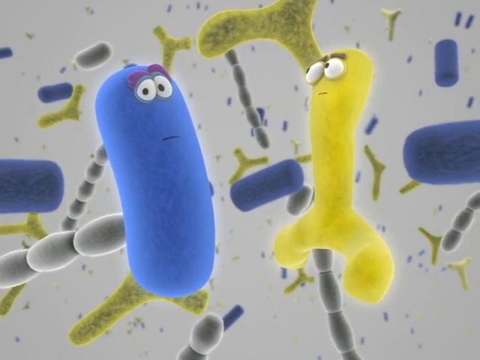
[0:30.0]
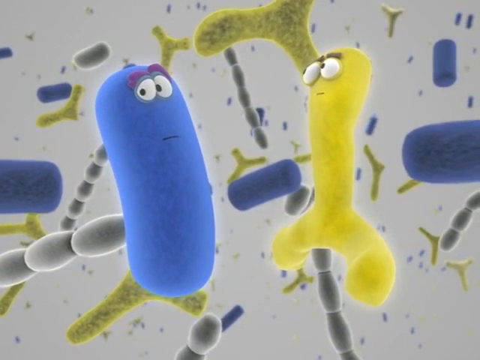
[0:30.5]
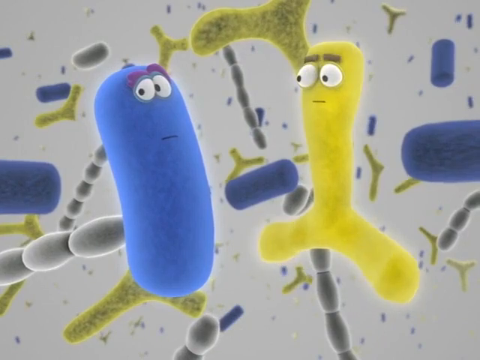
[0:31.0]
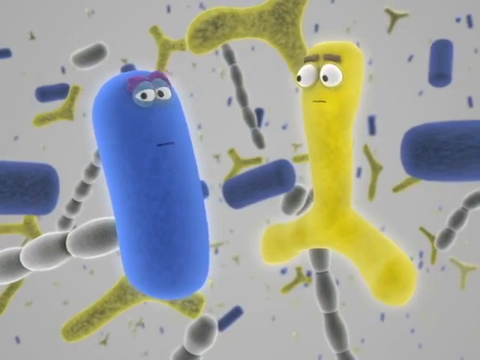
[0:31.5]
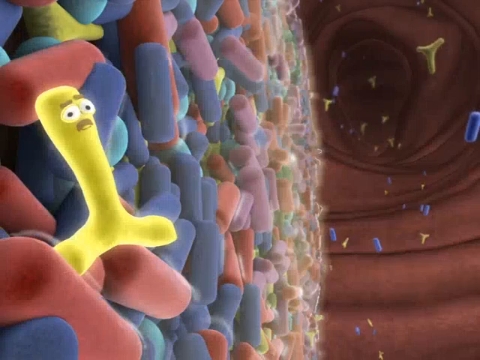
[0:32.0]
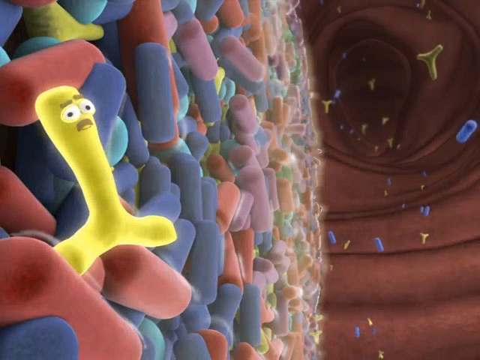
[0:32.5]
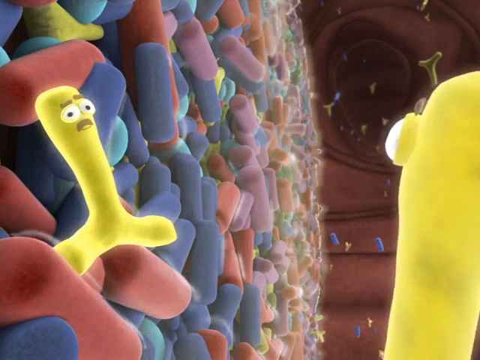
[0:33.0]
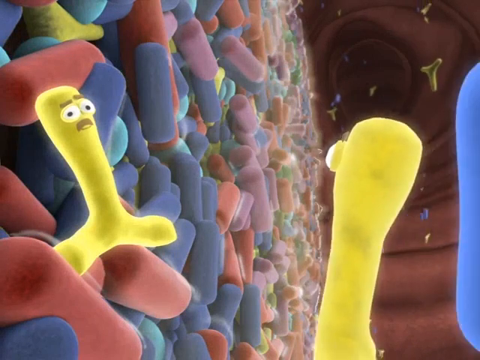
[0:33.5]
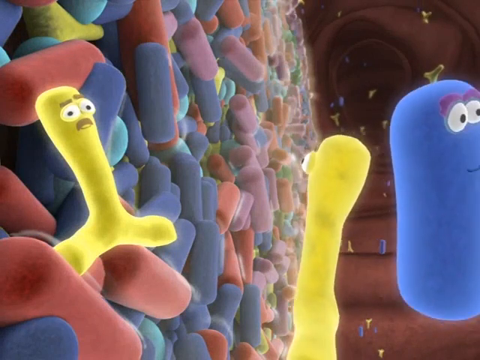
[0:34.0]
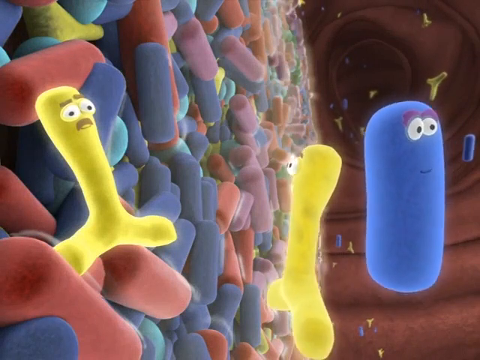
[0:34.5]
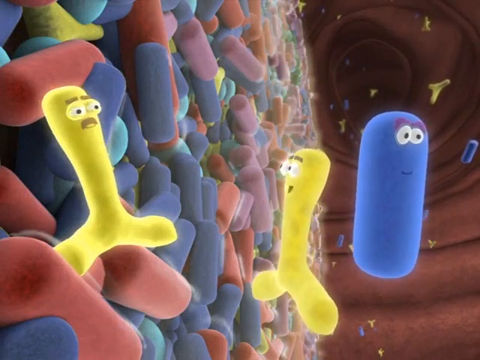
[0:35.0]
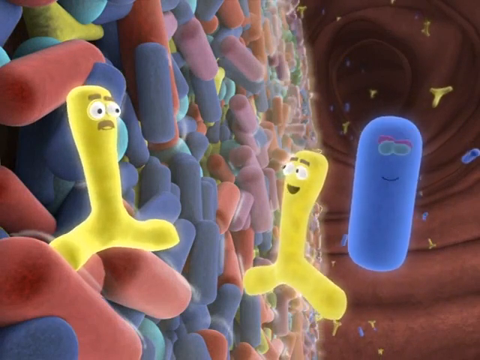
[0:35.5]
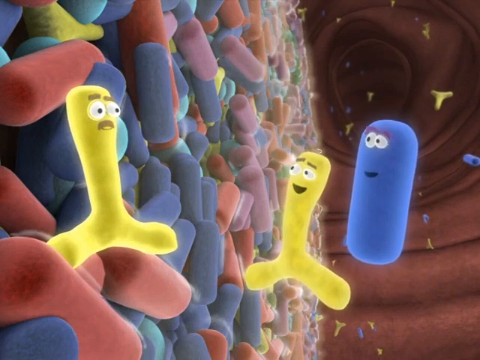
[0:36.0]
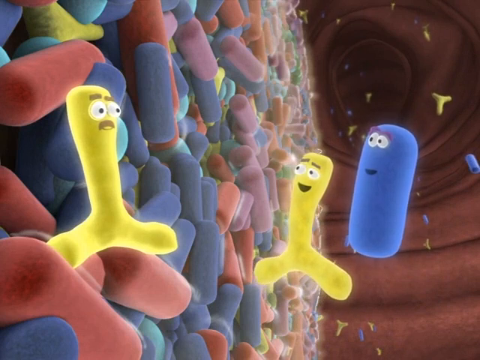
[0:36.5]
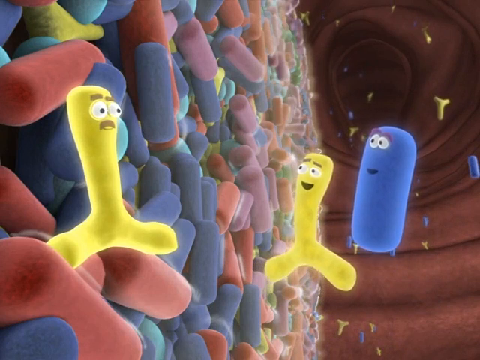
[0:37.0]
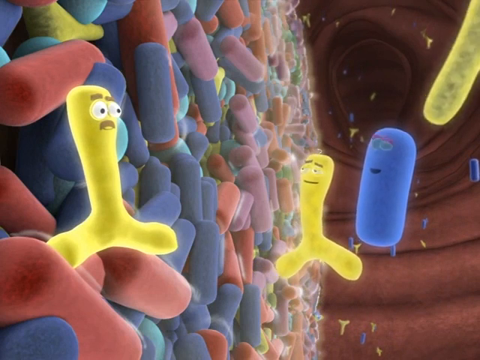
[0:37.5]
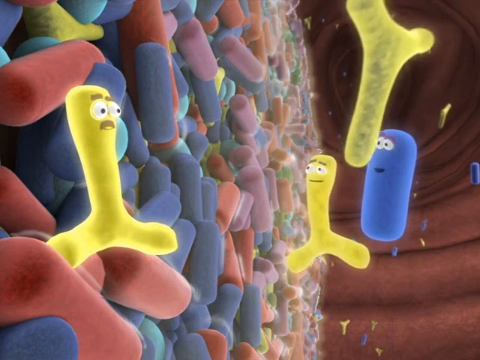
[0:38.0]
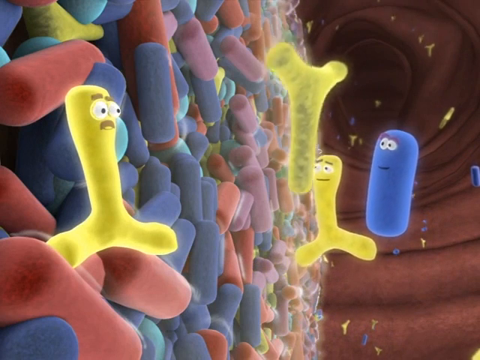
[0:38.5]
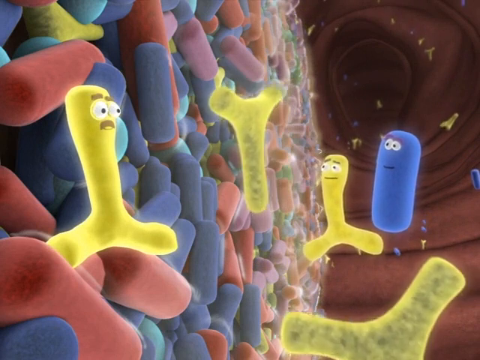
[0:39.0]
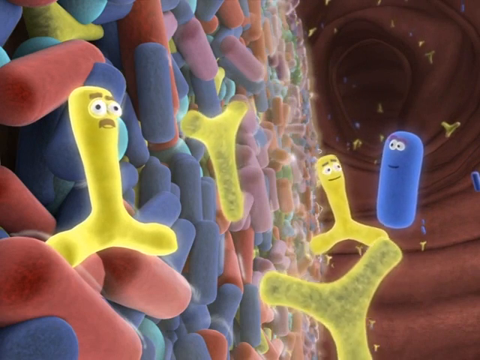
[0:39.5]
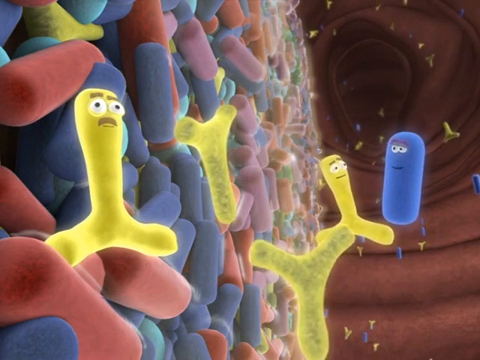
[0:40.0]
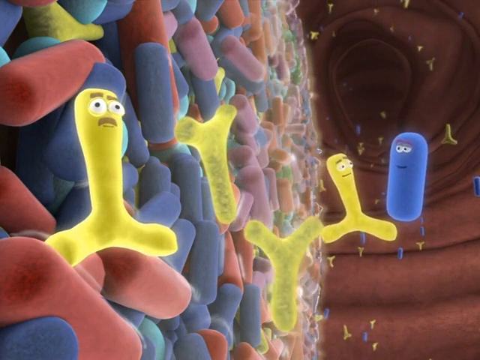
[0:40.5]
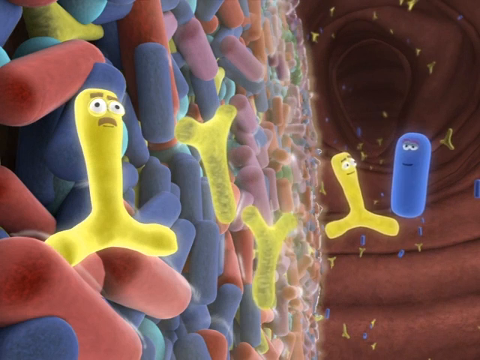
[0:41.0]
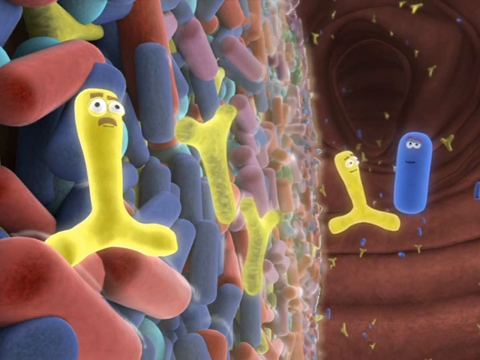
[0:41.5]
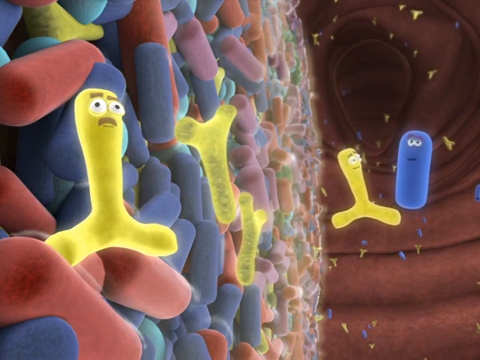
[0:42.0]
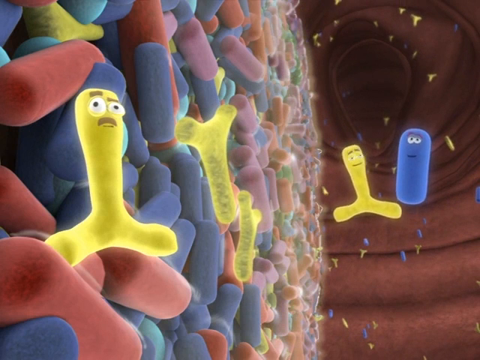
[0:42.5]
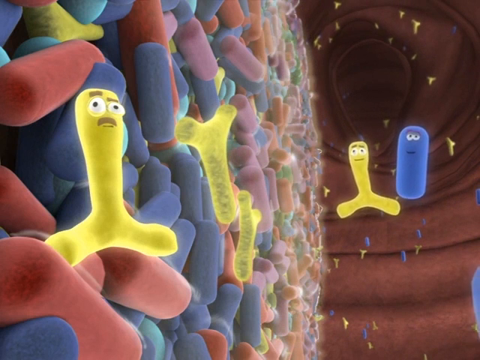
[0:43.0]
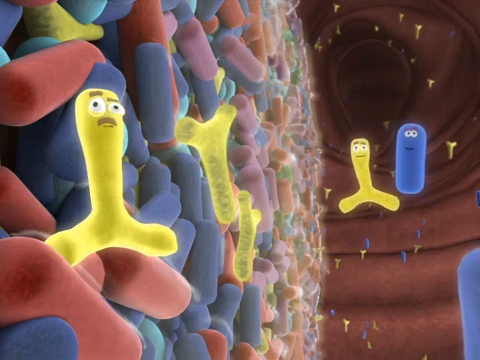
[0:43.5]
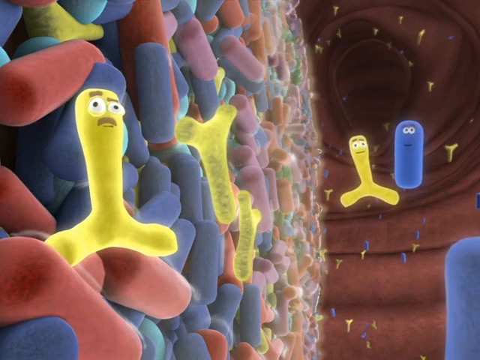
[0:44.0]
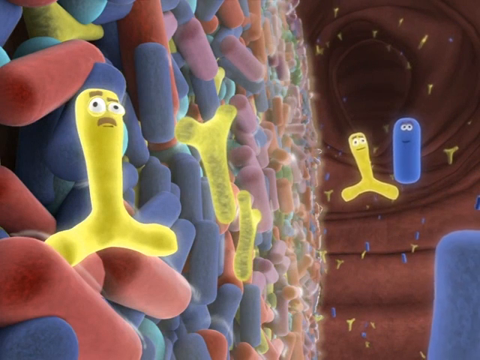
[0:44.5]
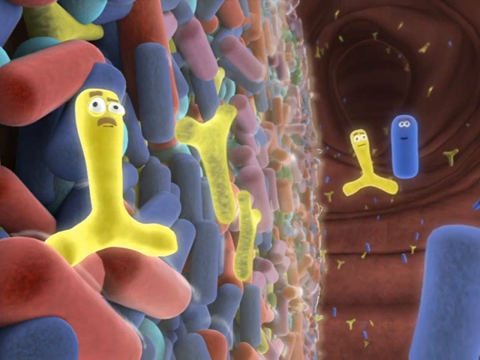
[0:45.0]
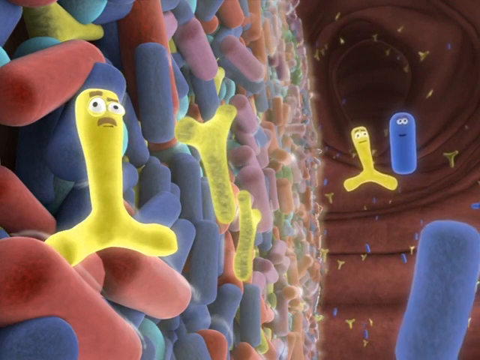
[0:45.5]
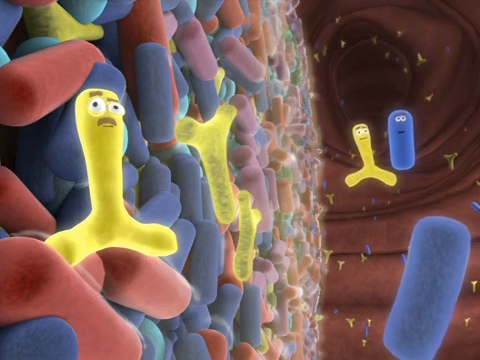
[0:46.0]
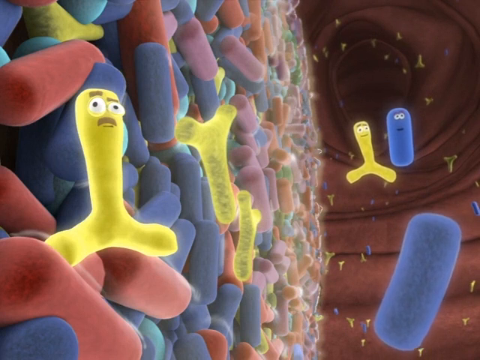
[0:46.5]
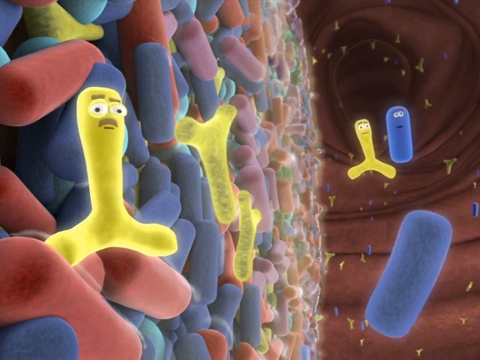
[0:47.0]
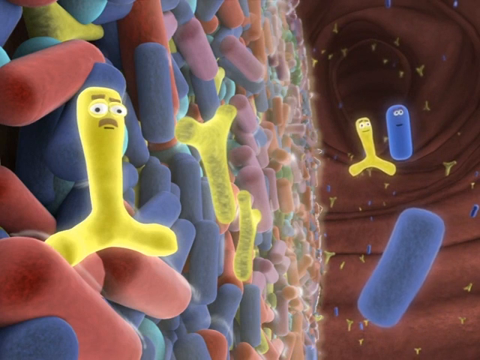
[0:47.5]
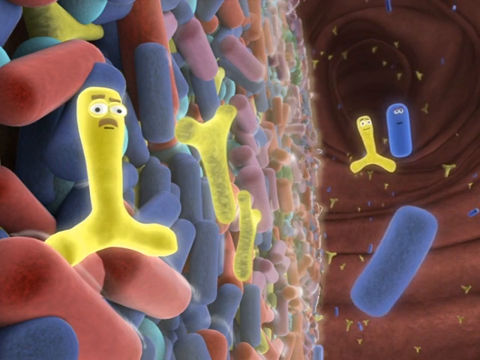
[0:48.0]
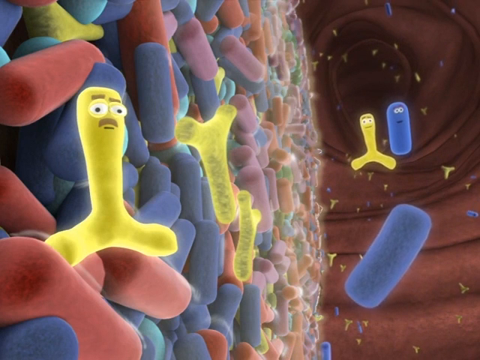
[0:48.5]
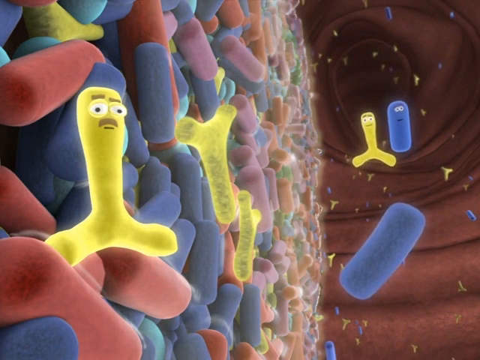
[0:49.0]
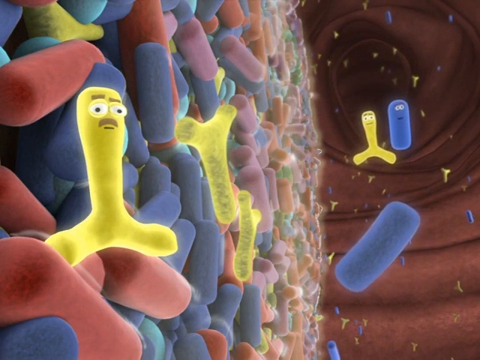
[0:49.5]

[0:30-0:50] The blue probiotic stays on the left and the yellow probiotic on the right. The blue one is very long, almost cylinder-shaped, while the yellow one looks like an upside-down Y. A yellow probiotic is then shown lying down or stuck among a large cluster of other colorful probiotics, and the yellow and blue probiotics come in from the right side, making three probiotics in view, all with eyes and mouths. The yellow and blue pair on the right float away into the distance down what looks like some sort of tunnel, while the yellow probiotic remains stuck in the large cluster. They look worried and scared. On the right, the yellow and blue probiotics continue floating off down the tunnel, and other small probiotics float through the tunnel on the right side as well.